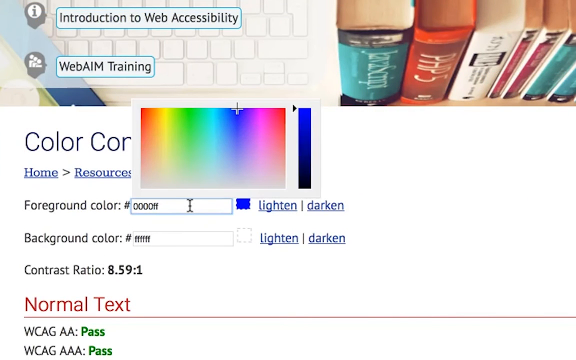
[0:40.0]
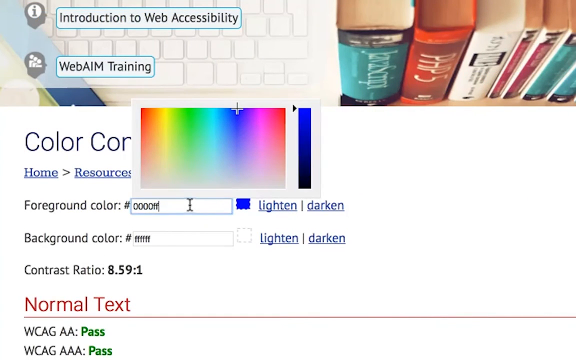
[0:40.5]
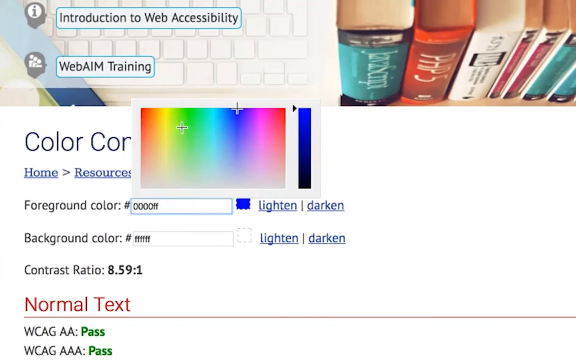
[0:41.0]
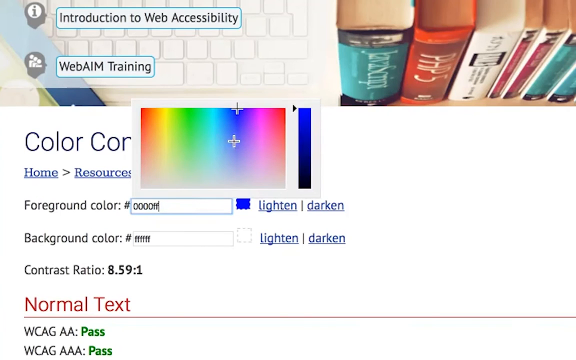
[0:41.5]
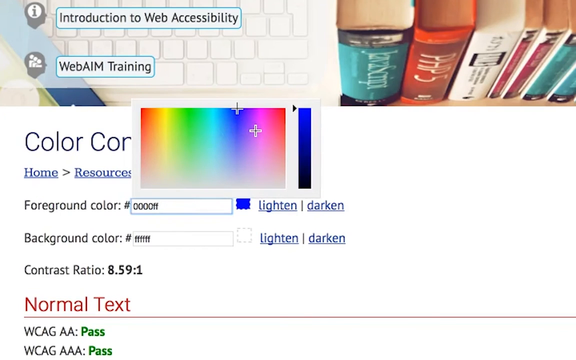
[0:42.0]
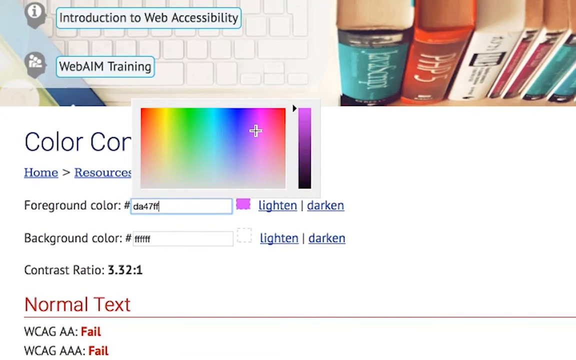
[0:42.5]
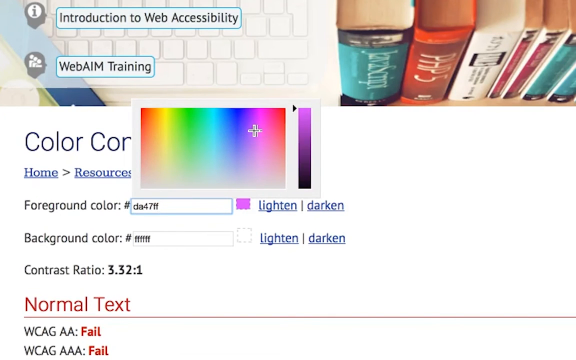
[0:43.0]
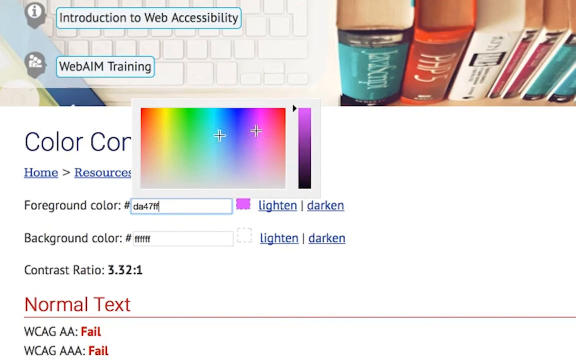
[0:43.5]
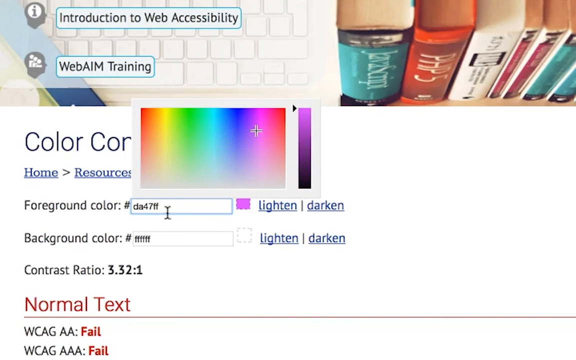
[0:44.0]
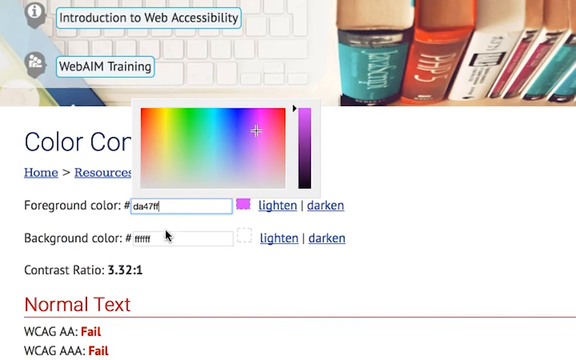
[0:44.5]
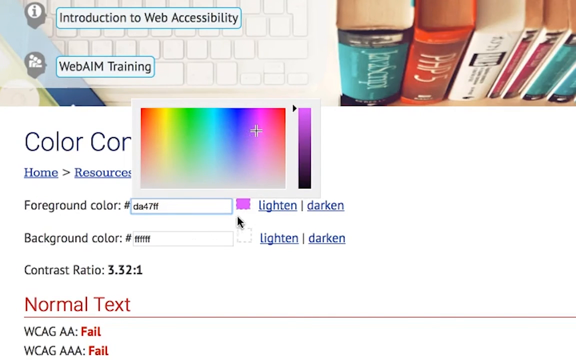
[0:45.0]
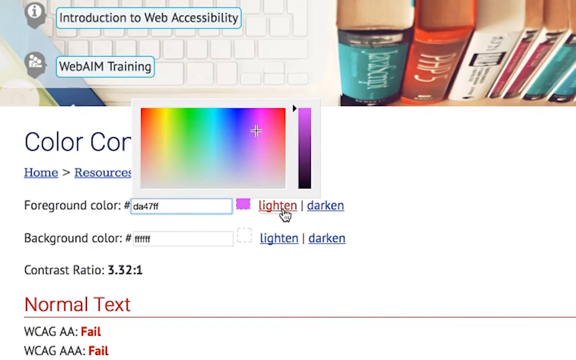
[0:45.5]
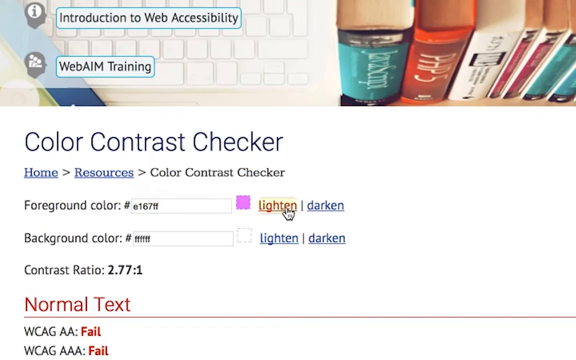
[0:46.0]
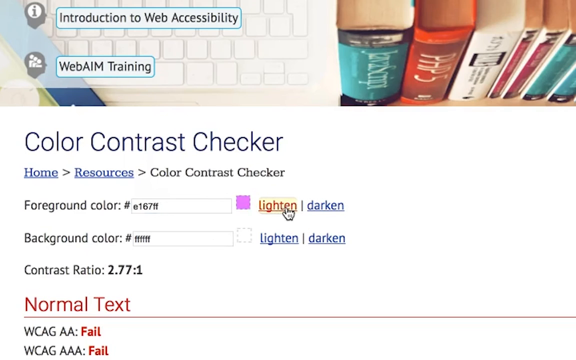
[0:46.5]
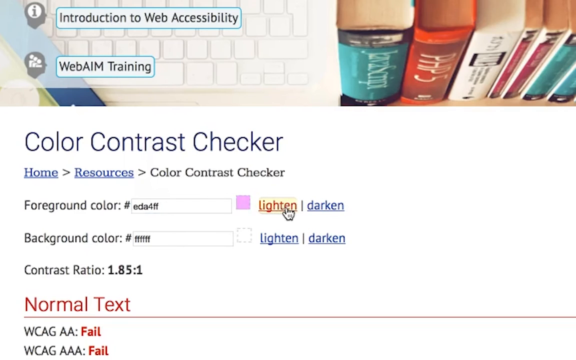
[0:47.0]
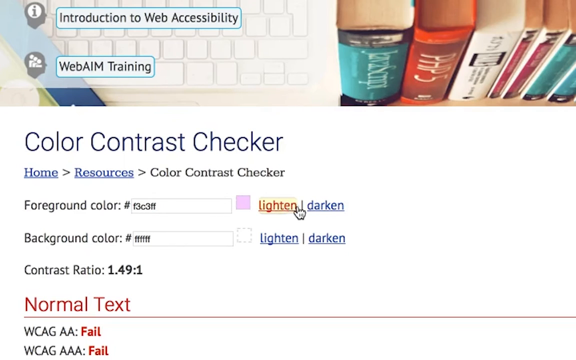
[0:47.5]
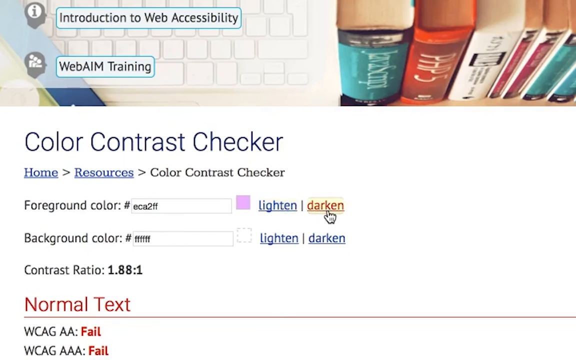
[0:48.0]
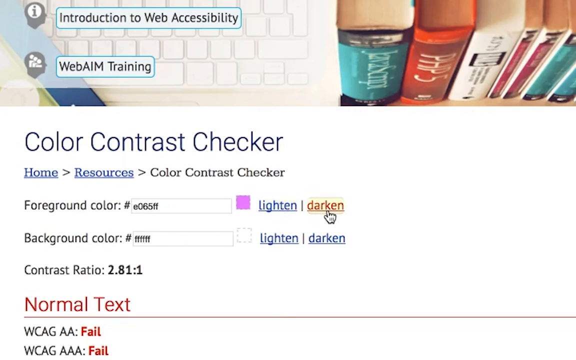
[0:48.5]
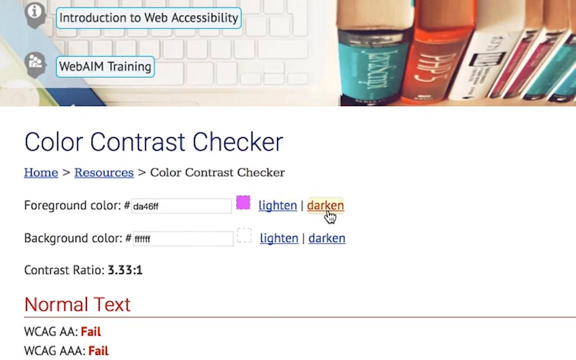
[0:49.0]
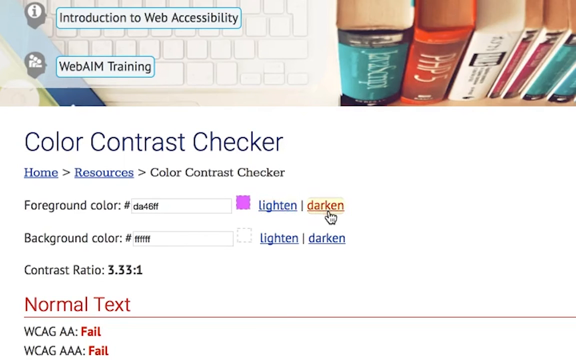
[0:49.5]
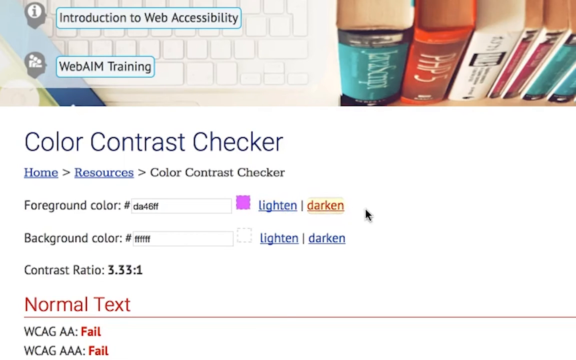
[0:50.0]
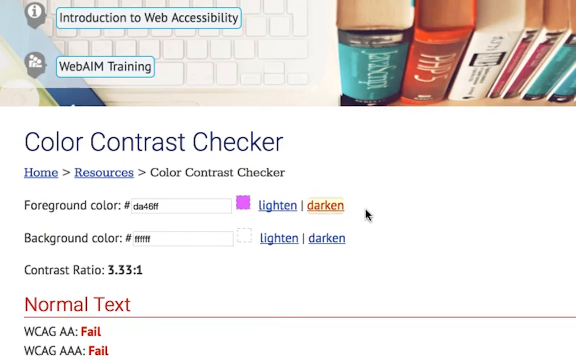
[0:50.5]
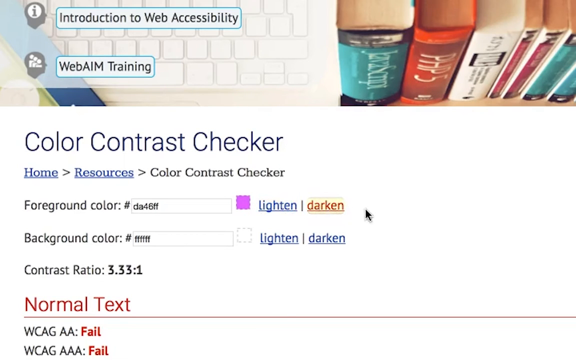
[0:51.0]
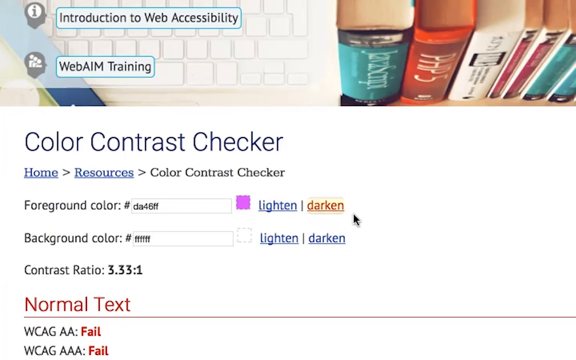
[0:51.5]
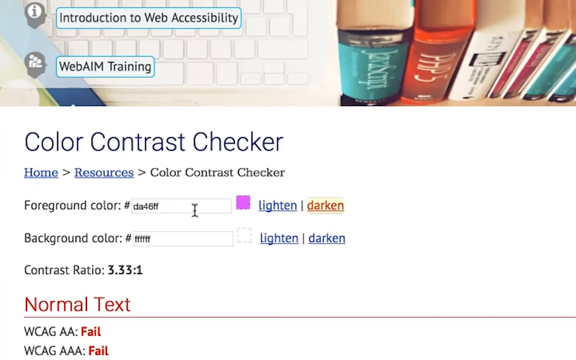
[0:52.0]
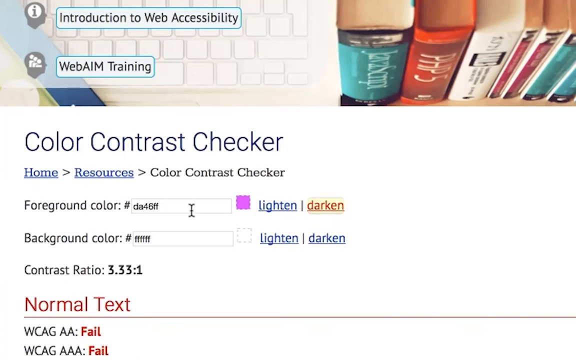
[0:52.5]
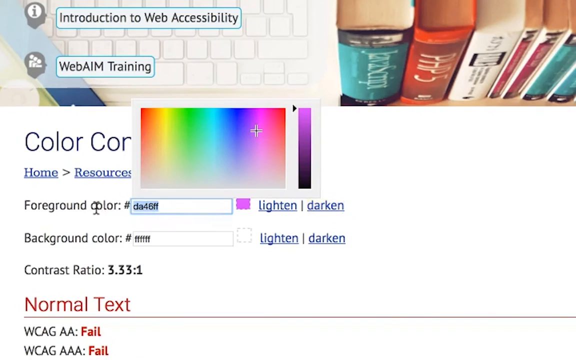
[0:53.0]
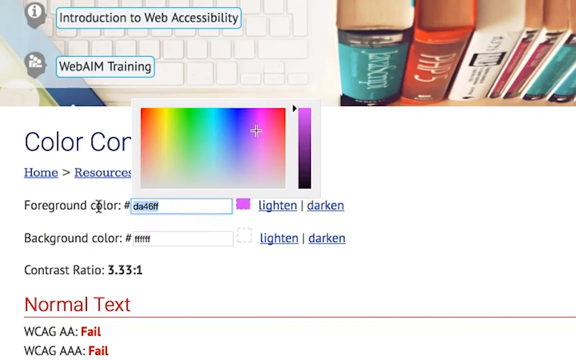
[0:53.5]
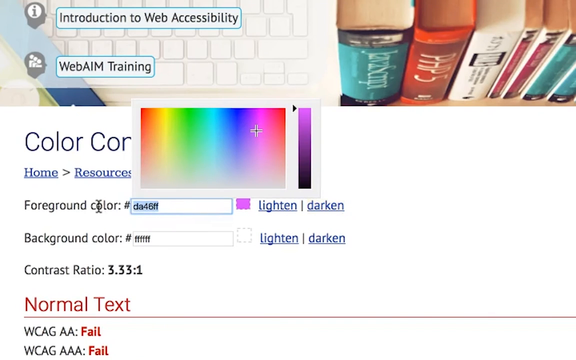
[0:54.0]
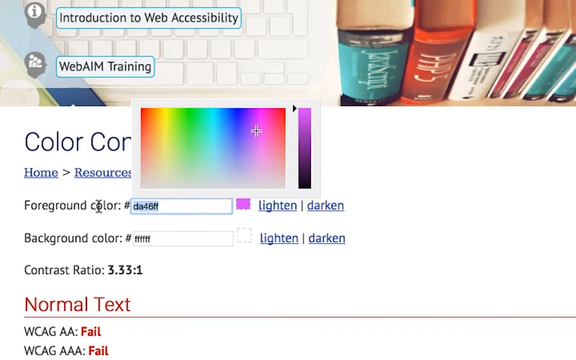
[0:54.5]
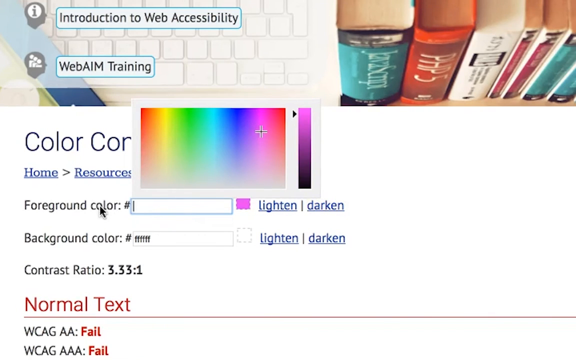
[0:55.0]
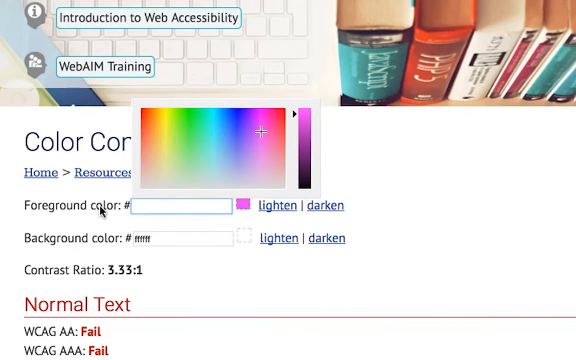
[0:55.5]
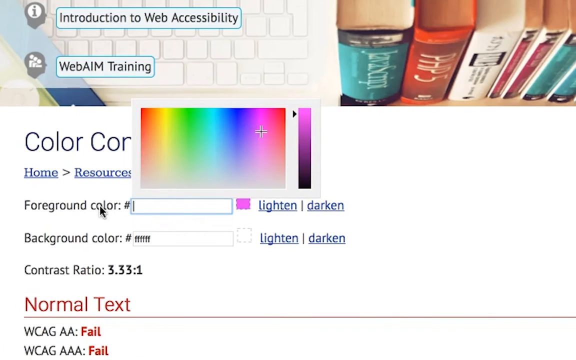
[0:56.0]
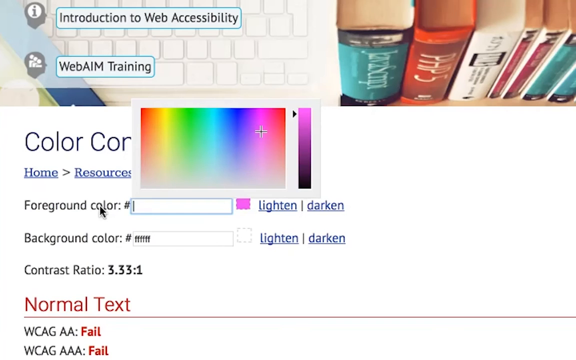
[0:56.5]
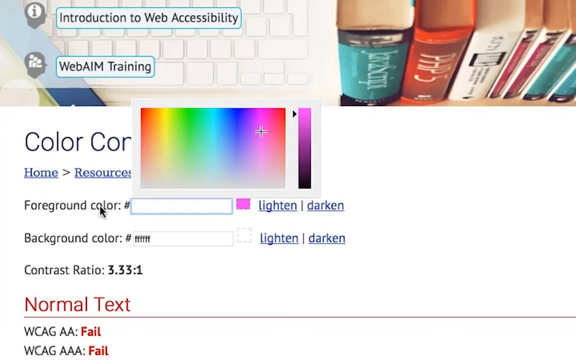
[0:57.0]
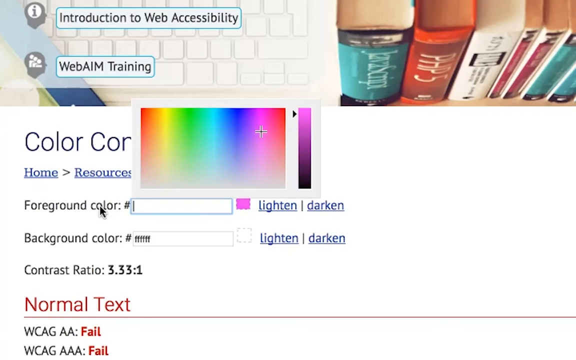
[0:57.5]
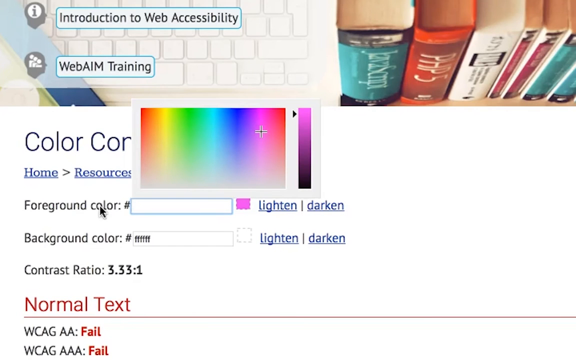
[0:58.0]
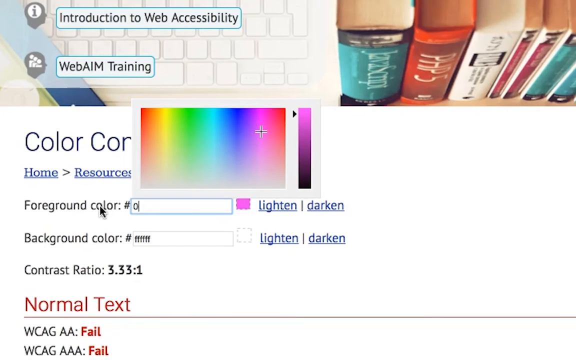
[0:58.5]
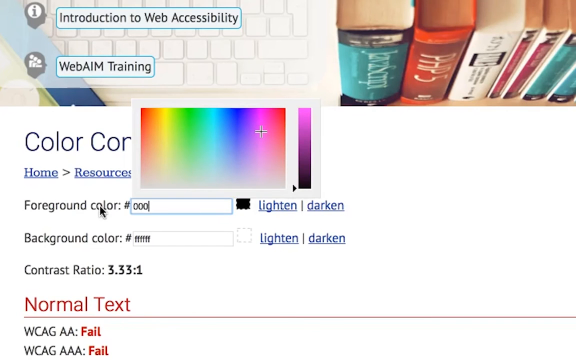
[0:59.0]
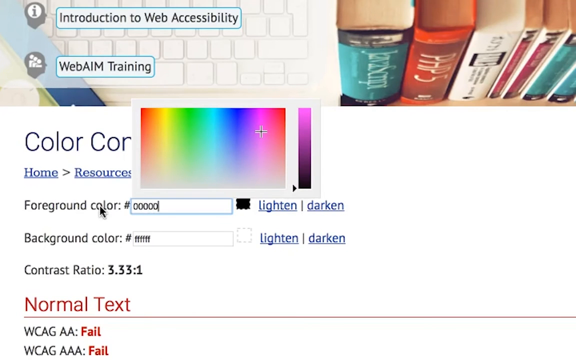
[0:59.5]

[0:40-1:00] A WebAIM web page for training, "Introduction to Web Accessibility," is shown at the bottom, in a section for color contrast. Above the cursor is a rainbow-like color bar. The cursor moves over it and appears to add plus signs to the rainbow, then moves below it to a box for foreground color with a choice to lighten or darken. It hovers over lighten, then darken. It returns to the box, and the rainbow box appears once again. A code number is entered into the box, then the cursor returns to the box, chooses the lighten tab, and scrolls over the darken tab. This is the foreground color part of the color contrast section, where a color can be chosen and lightened or darkened.